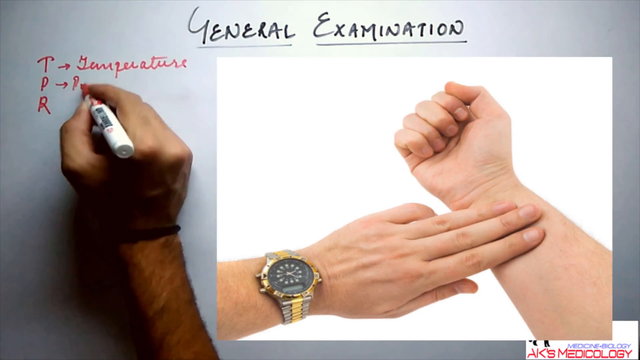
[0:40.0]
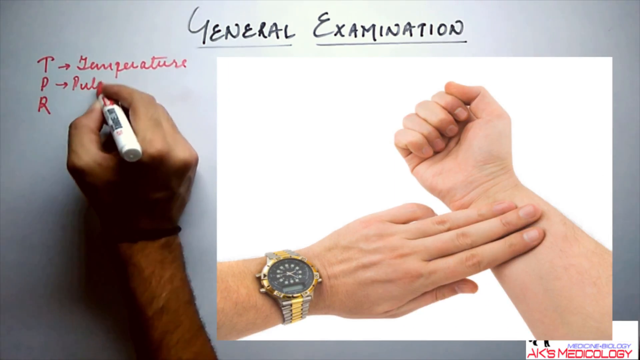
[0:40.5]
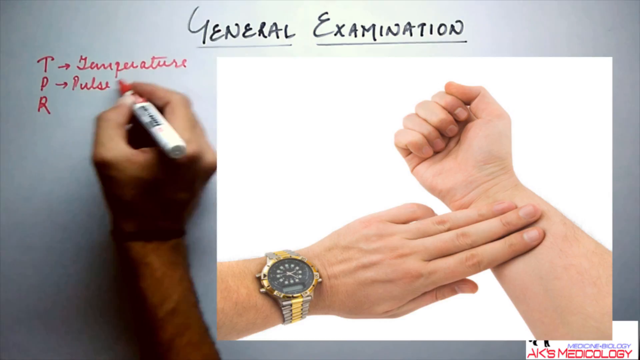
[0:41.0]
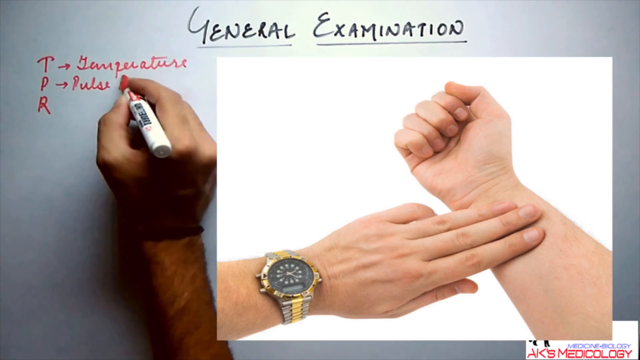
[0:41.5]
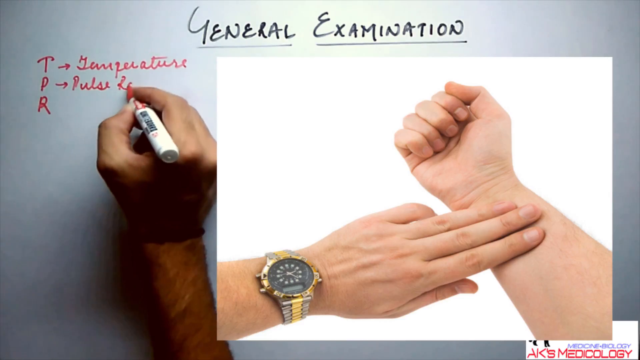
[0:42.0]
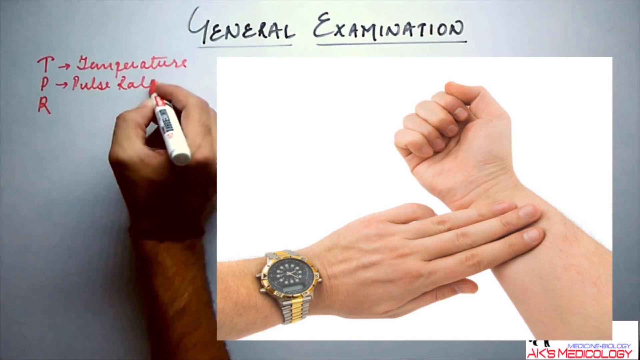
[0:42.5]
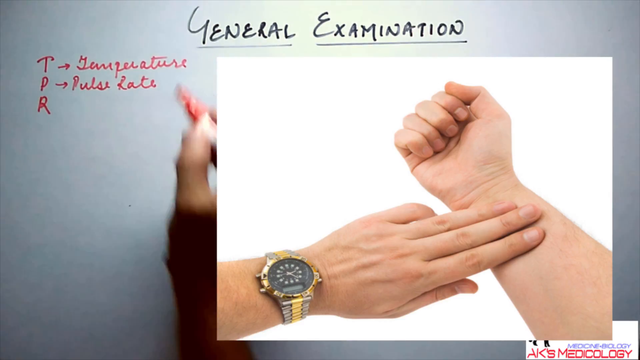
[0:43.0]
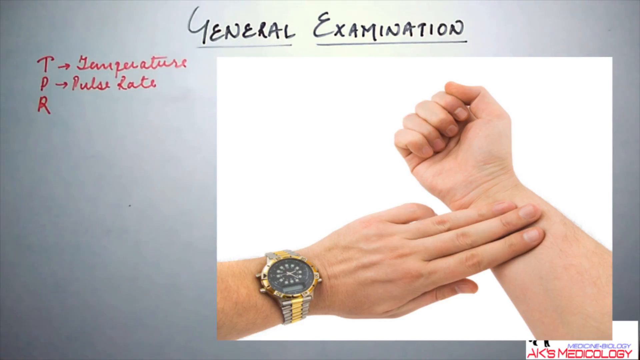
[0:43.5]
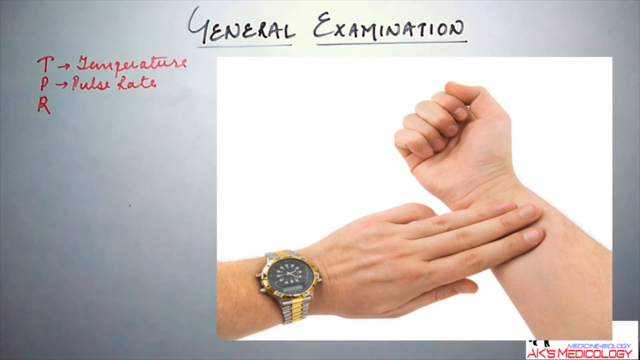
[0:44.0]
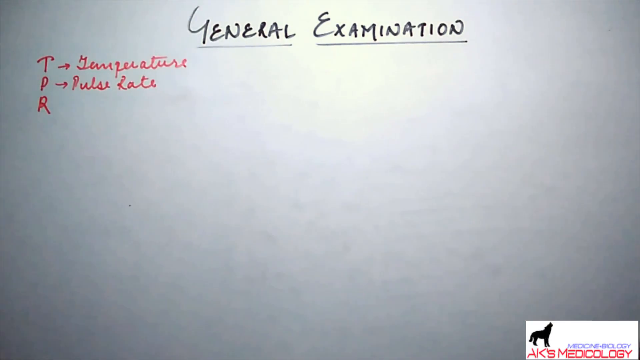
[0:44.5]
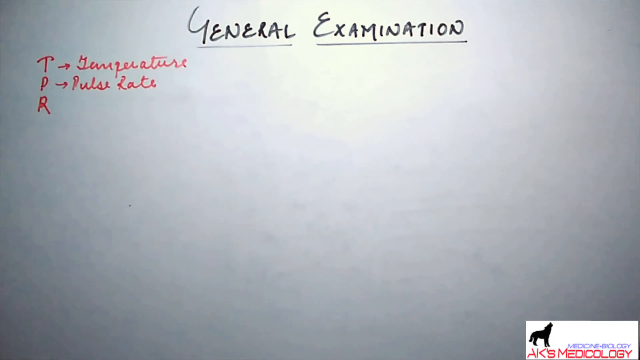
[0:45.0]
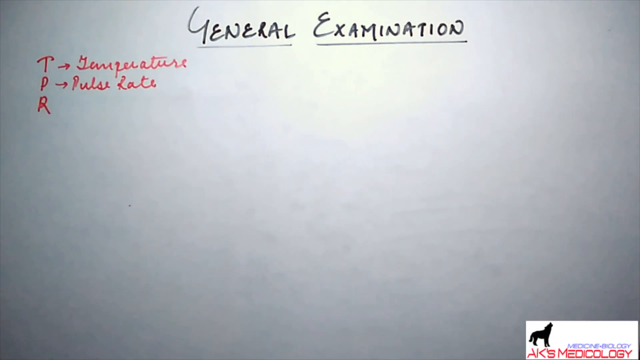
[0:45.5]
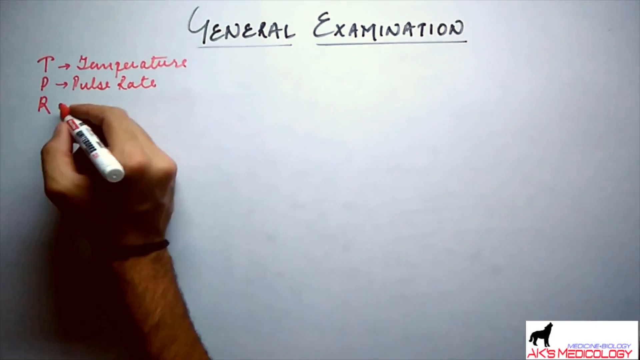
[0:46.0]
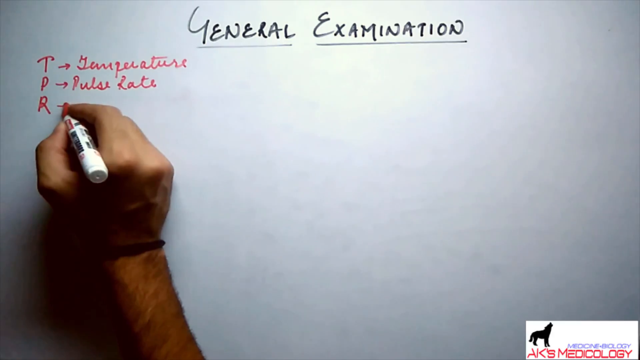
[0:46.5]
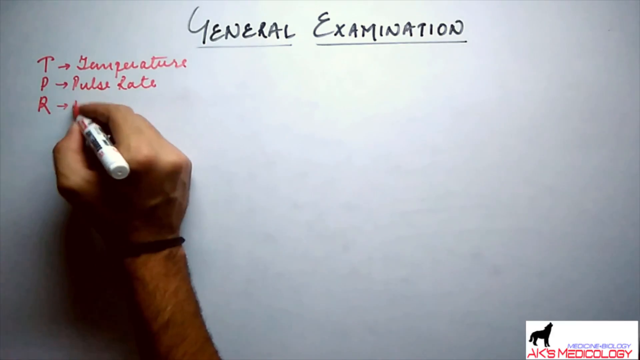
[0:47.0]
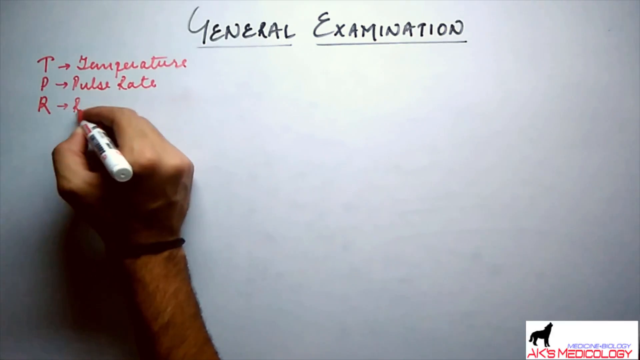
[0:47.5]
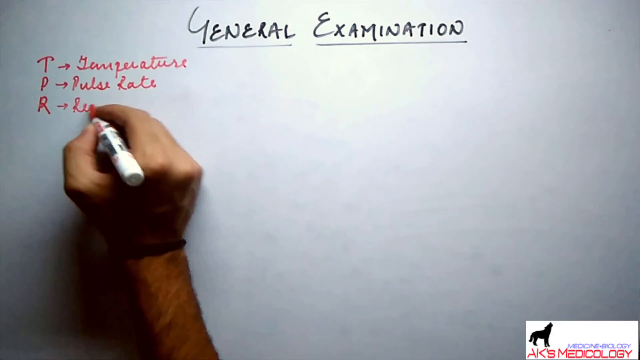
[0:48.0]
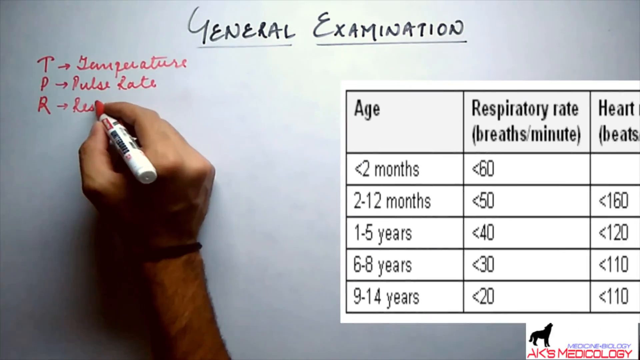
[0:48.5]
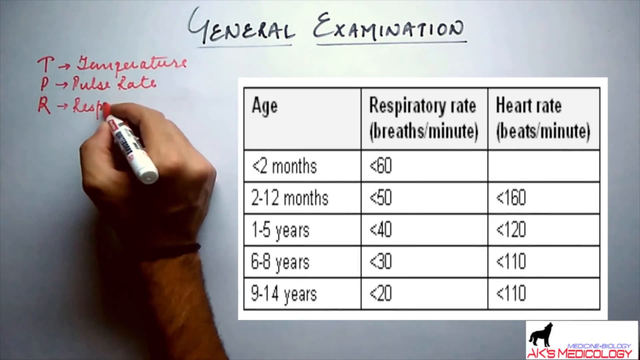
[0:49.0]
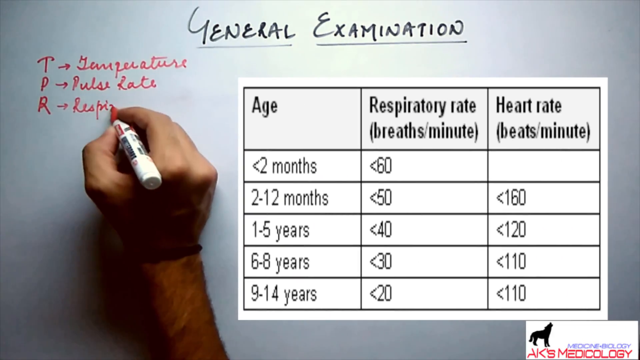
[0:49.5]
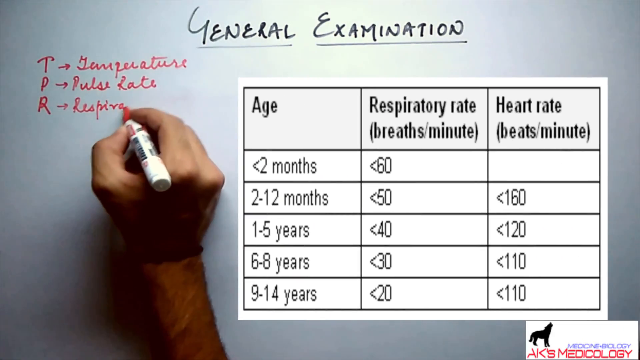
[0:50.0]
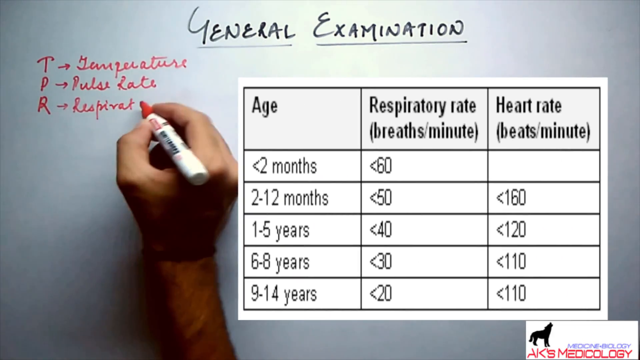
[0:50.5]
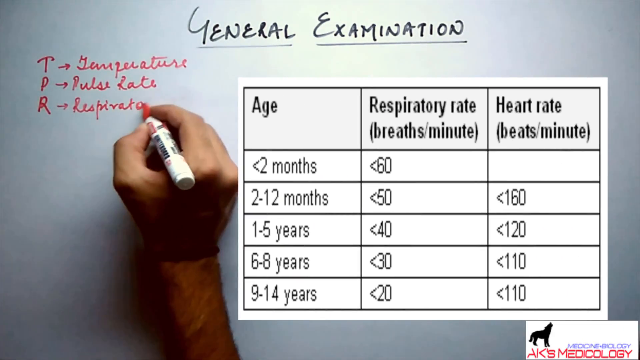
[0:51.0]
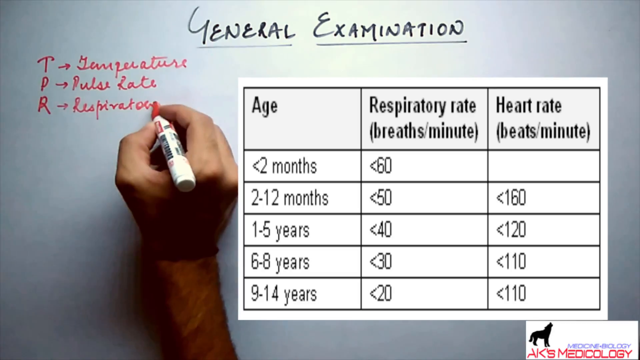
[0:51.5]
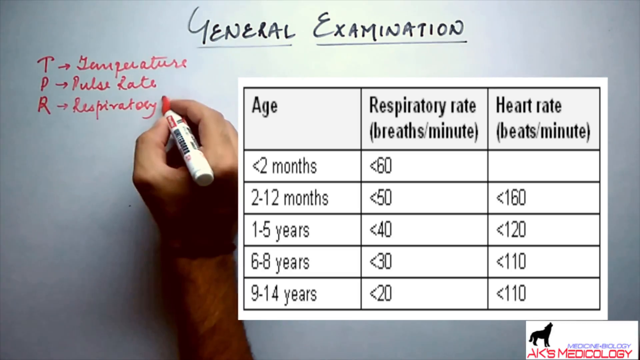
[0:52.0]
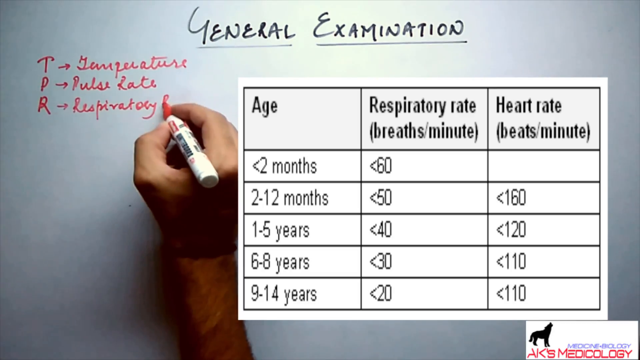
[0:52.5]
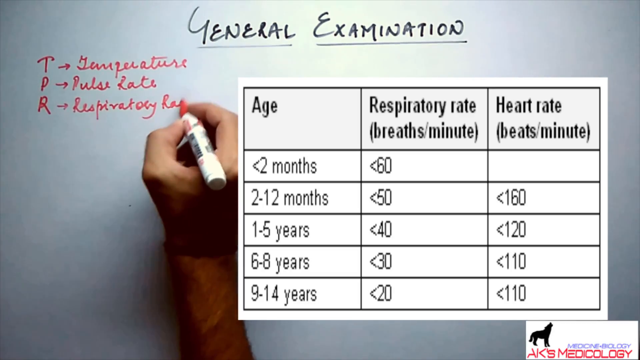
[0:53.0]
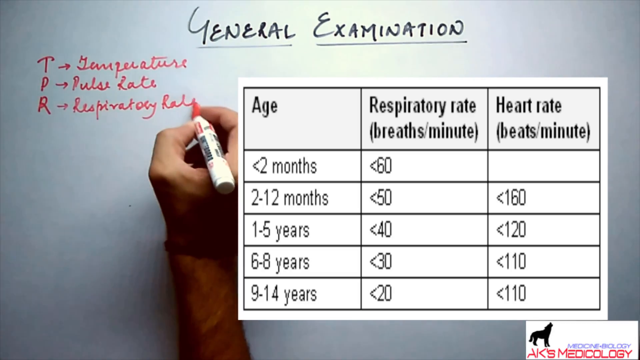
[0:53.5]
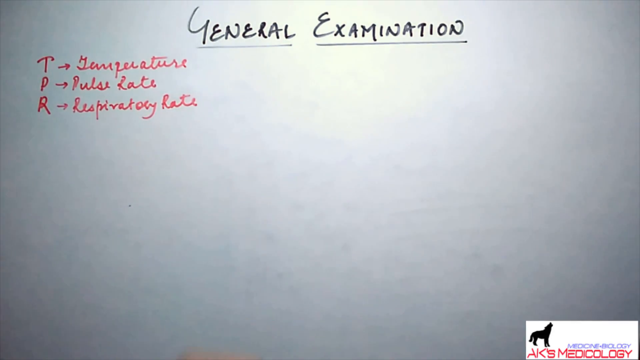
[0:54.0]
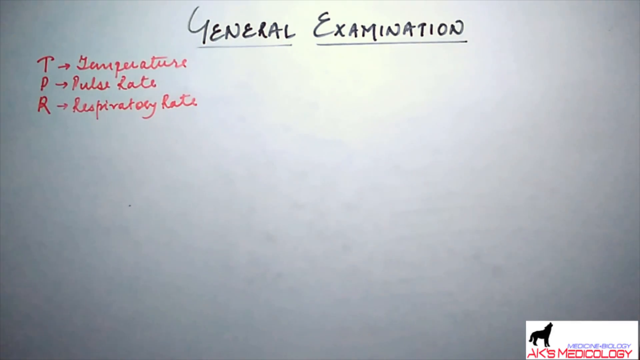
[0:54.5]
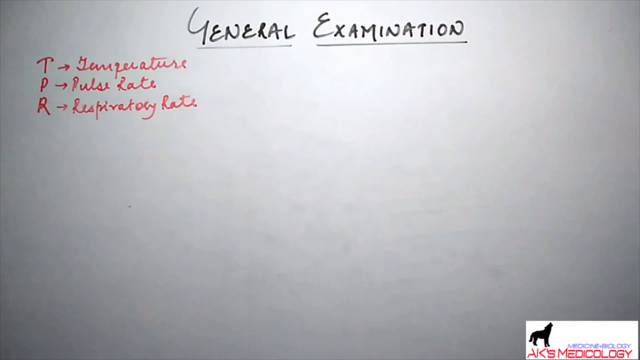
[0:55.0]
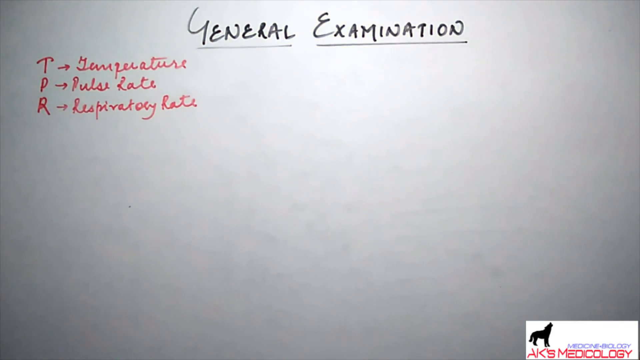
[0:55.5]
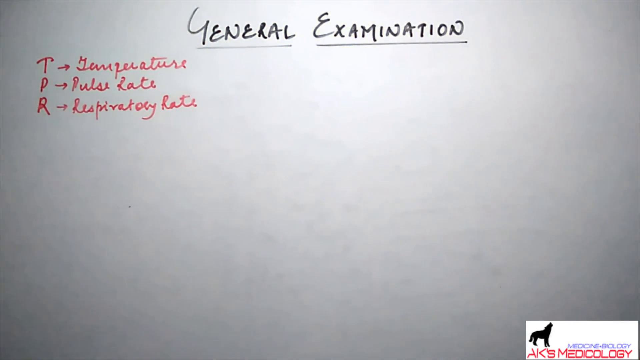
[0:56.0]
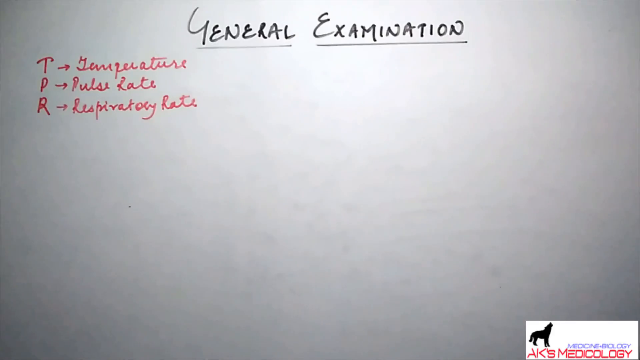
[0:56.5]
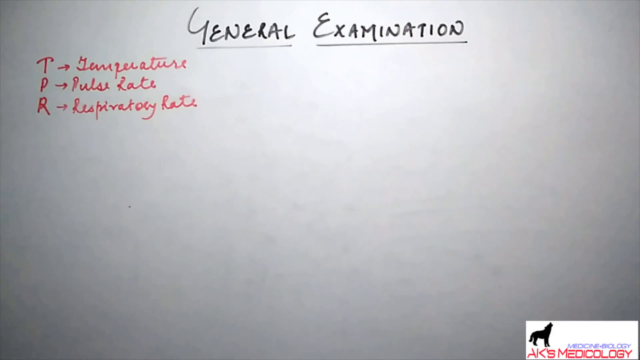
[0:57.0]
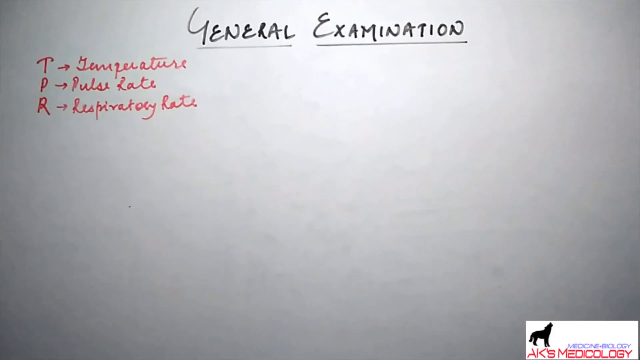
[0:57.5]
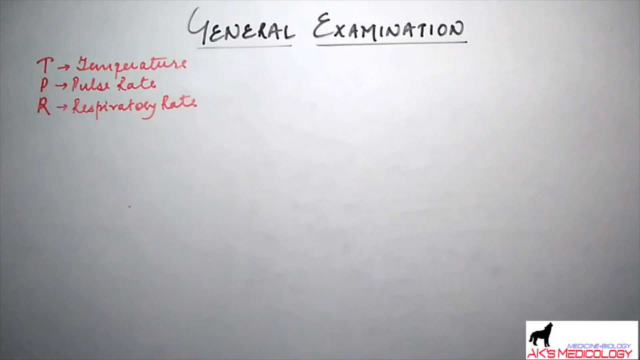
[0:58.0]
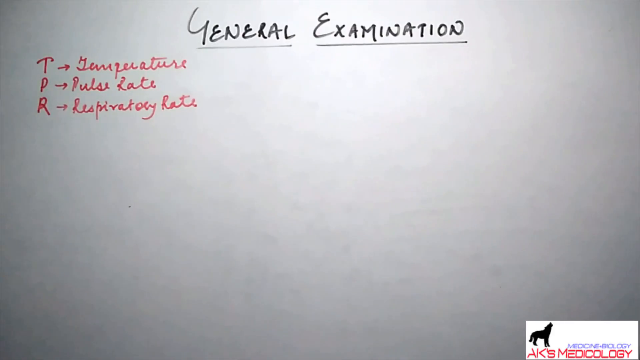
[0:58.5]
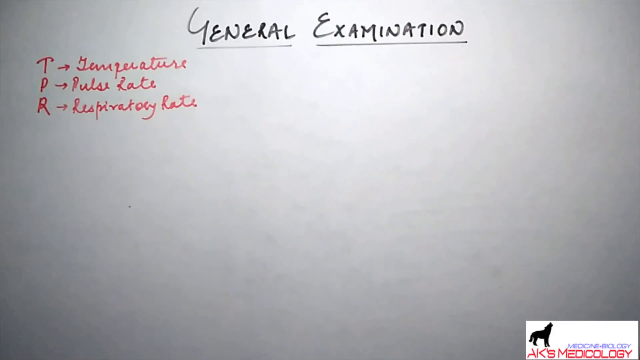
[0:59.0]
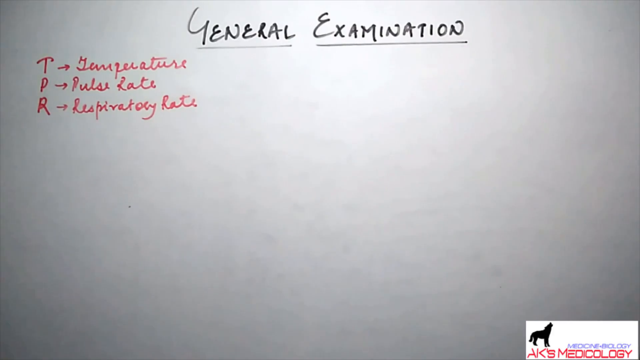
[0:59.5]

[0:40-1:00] The whiteboard shows "General Examination" with the letters TPR, and the word "temperature" beside the T. A picture of two arms and hands, one hand wearing a gold watch, shows someone placing their fingers on the other forearm as if checking a pulse. The picture leaves the screen and "pulse rate" is written beside the P. The word "respiratory" is written by the R as another picture comes into the frame: a chart showing age, respiratory rate and heart rate, with ages ranging from less than 2 months up to 14 years, a chart for children.